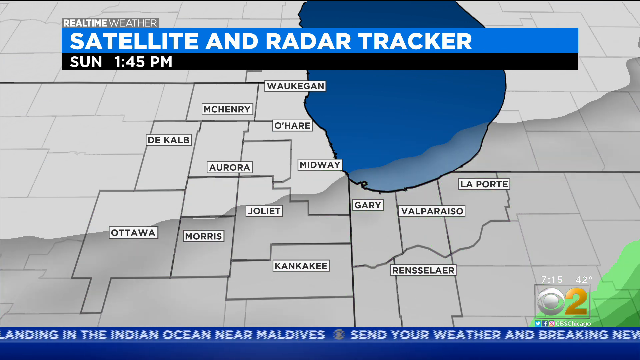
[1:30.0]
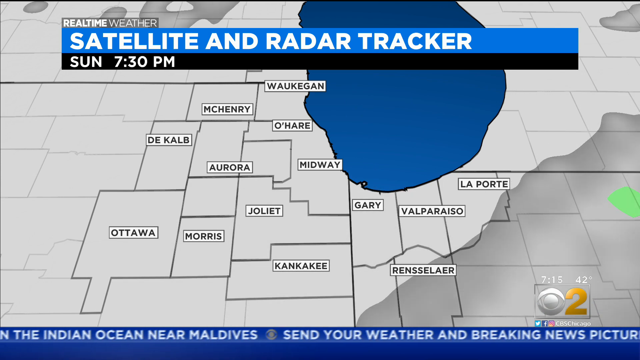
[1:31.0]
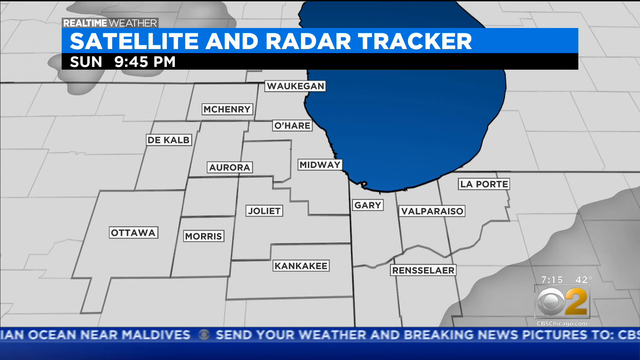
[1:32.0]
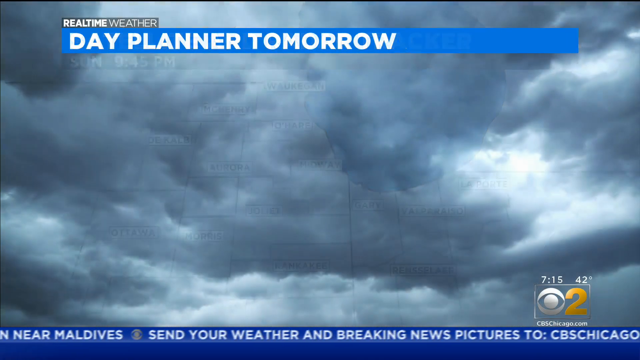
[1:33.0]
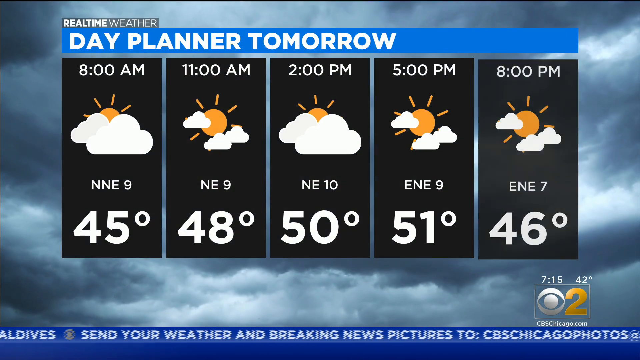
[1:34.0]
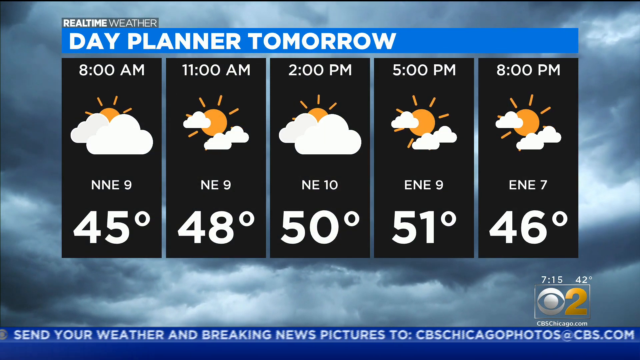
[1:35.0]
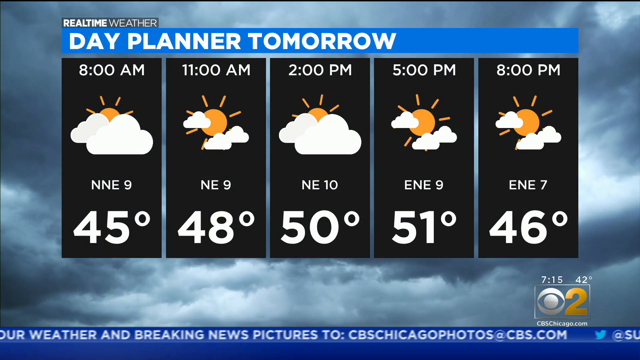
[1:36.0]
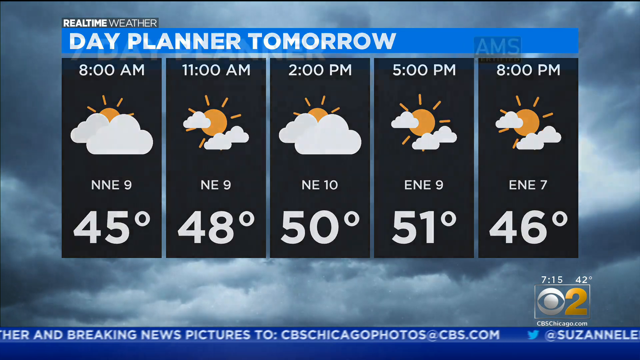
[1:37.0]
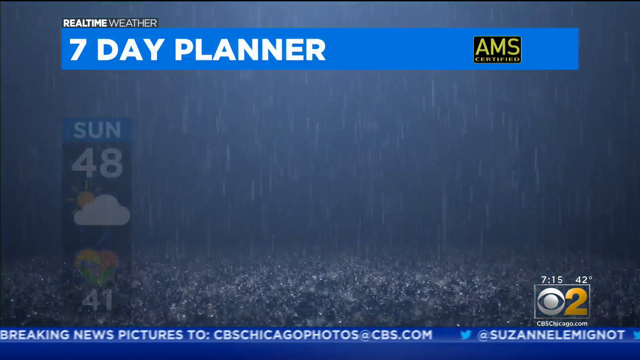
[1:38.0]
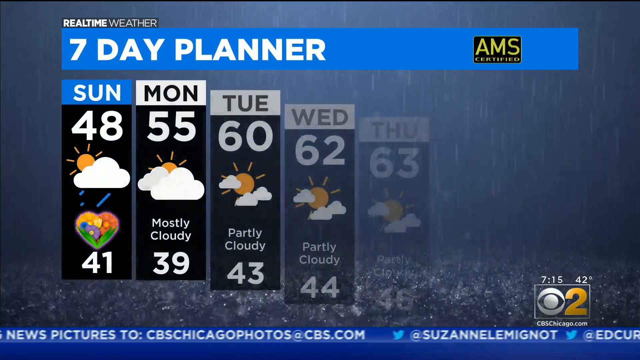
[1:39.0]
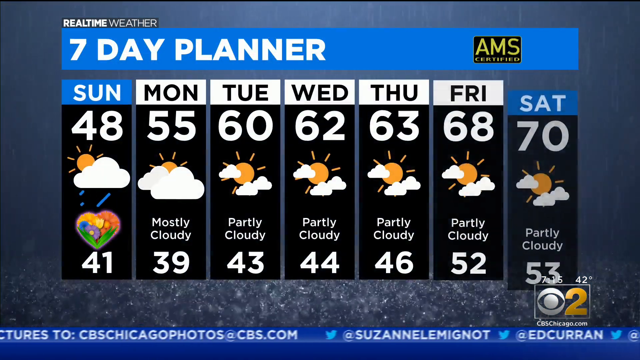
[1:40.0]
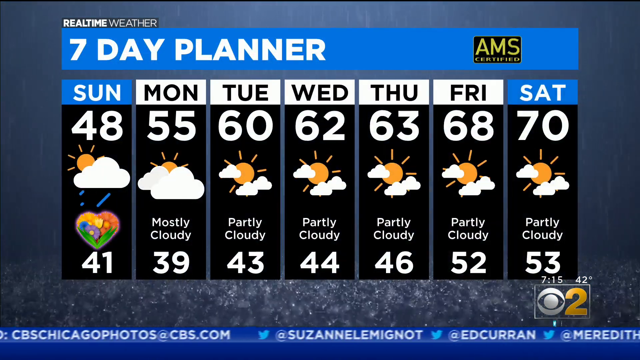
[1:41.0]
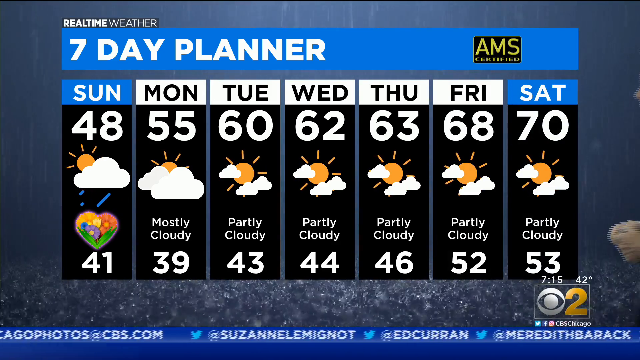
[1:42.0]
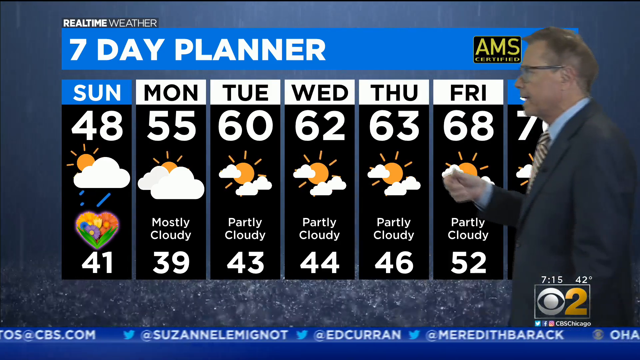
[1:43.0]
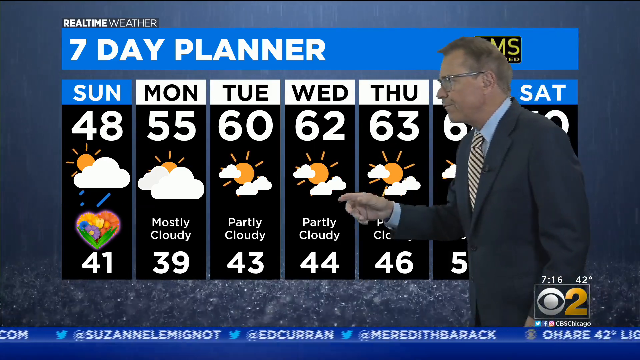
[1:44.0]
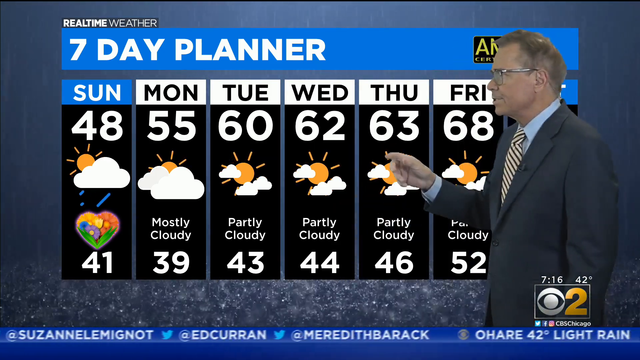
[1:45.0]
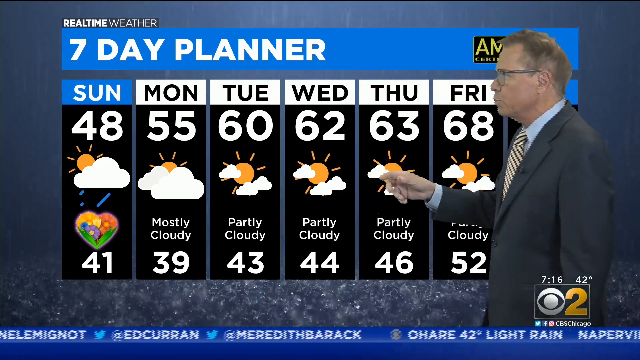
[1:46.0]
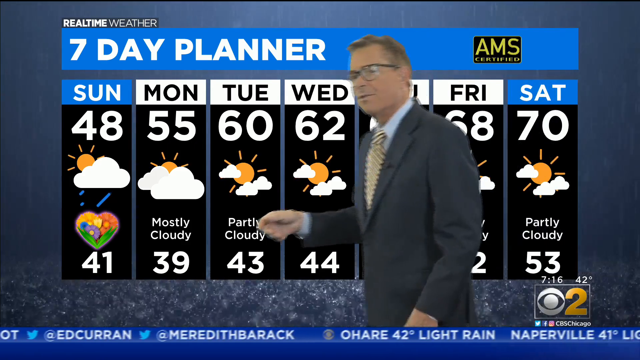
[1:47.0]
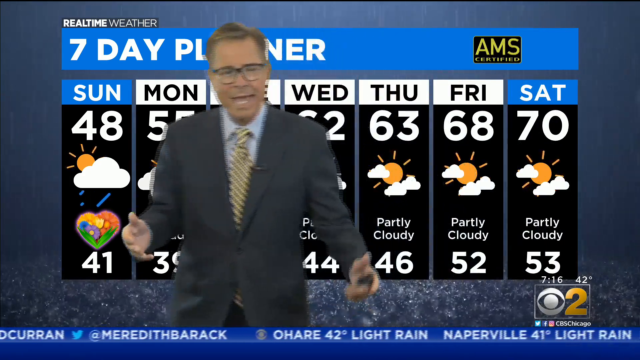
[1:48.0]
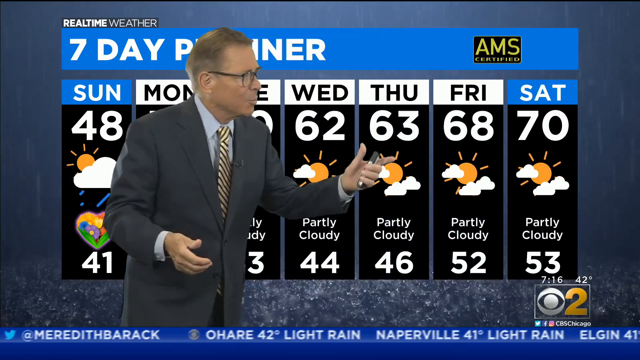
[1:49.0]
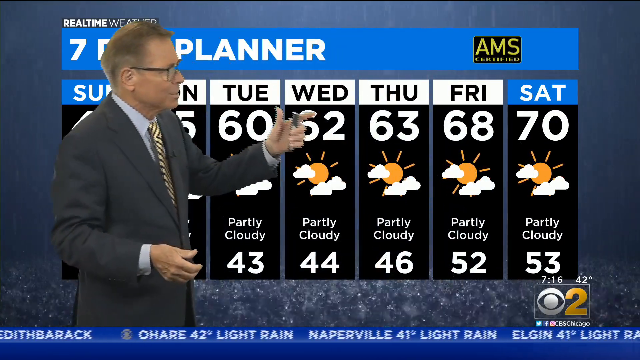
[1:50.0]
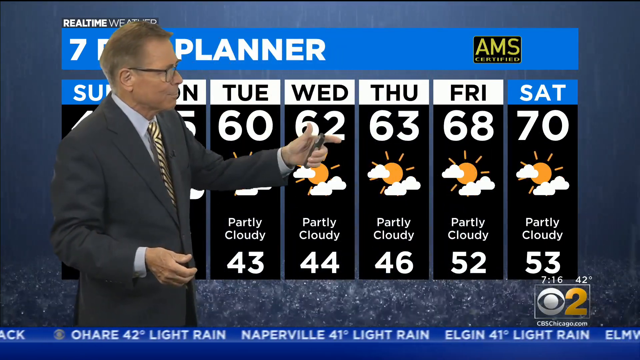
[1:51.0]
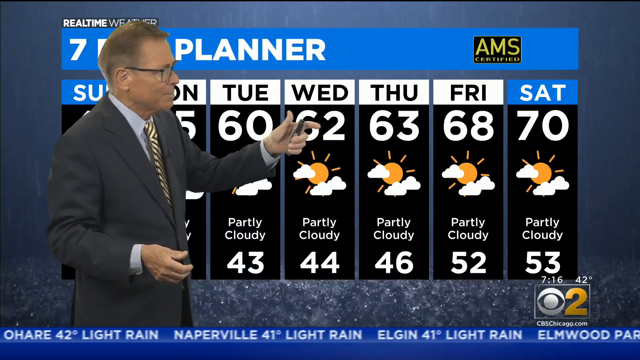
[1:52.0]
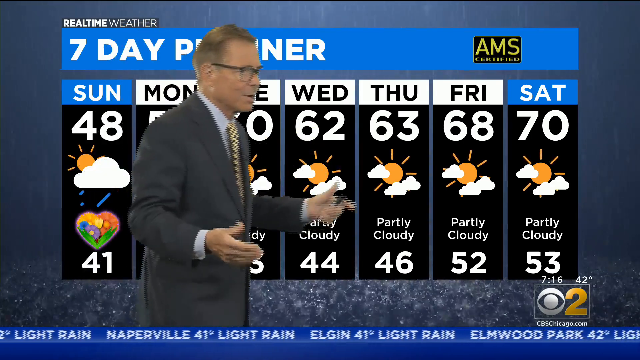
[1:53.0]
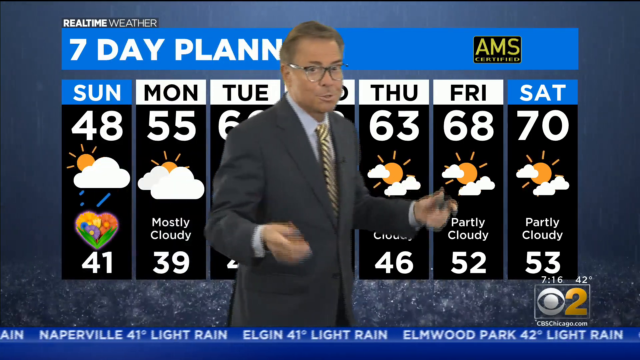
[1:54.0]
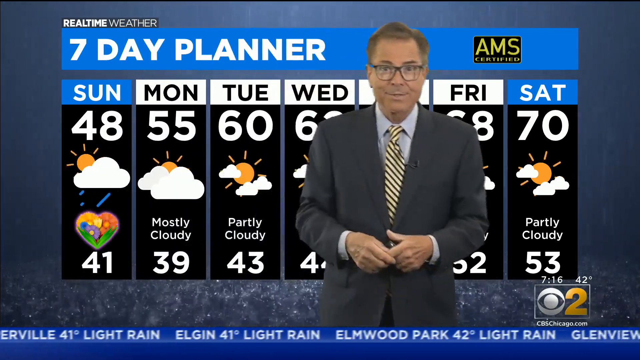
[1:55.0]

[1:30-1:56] A seven-day forecast from Sunday to Saturday is shown, along with percentages, with some parts partially cloudy with a bit of sunshine. Sunday shows 48 degrees, Monday 55 degrees, Tuesday 60 degrees and partially cloudy, Wednesday 63 degrees, Friday 68 degrees, and Saturday 70 degrees and partially cloudy. Mr. Ed Karen explains with a smile on his face and is wearing glasses.